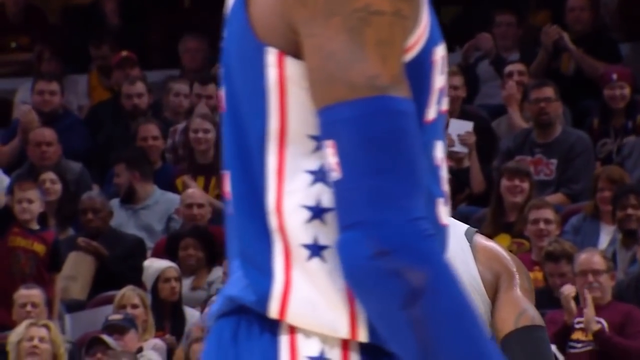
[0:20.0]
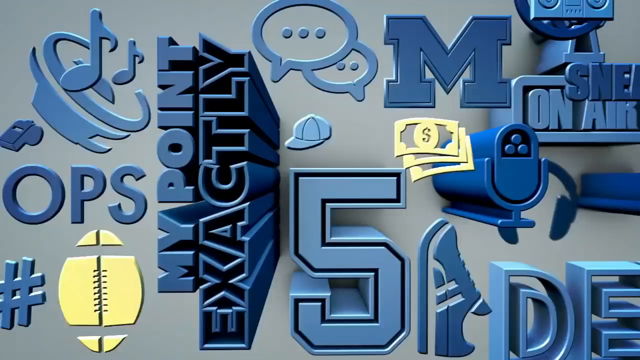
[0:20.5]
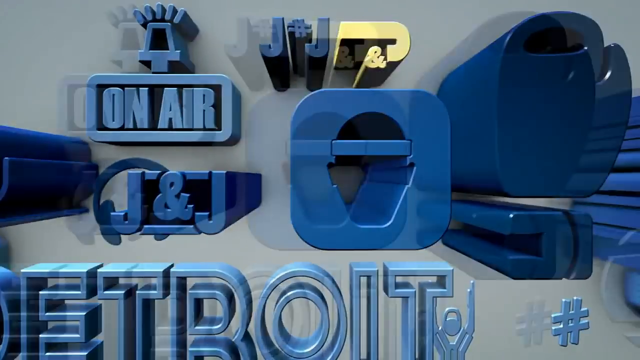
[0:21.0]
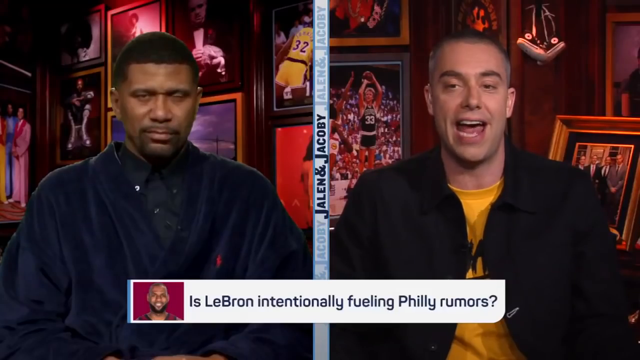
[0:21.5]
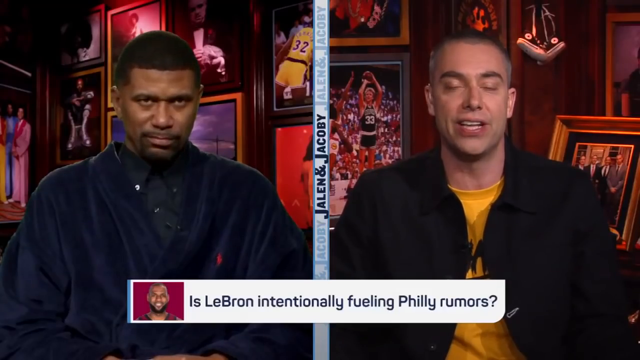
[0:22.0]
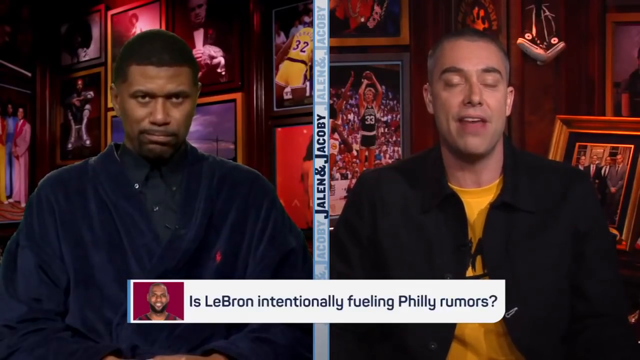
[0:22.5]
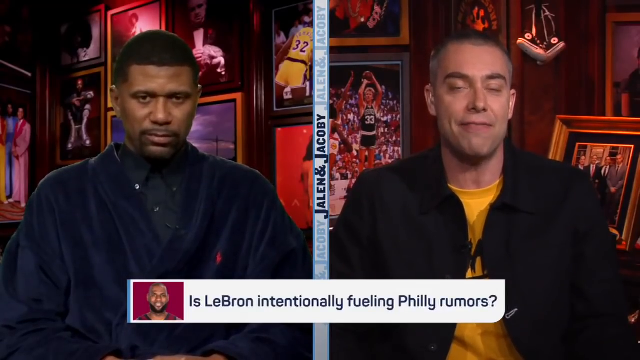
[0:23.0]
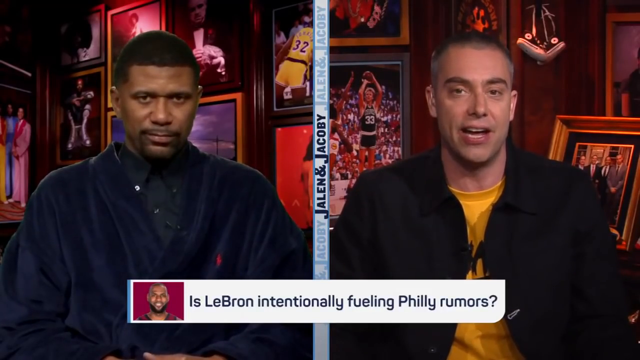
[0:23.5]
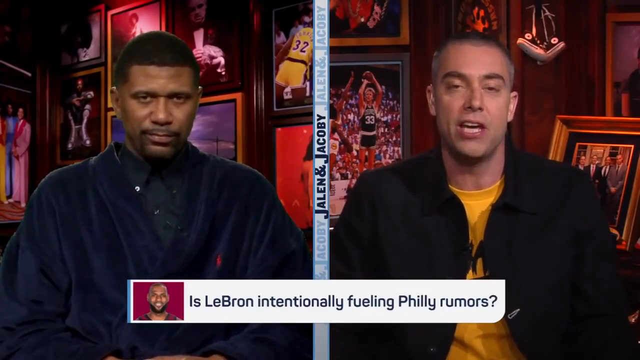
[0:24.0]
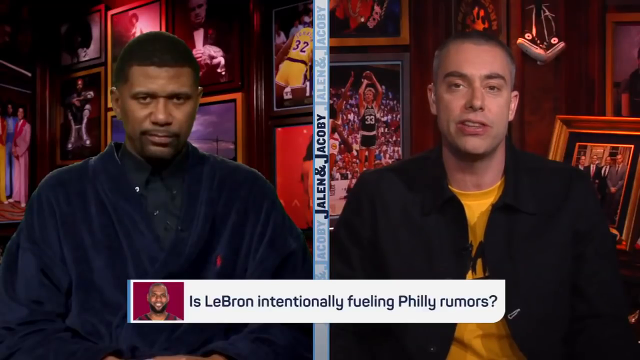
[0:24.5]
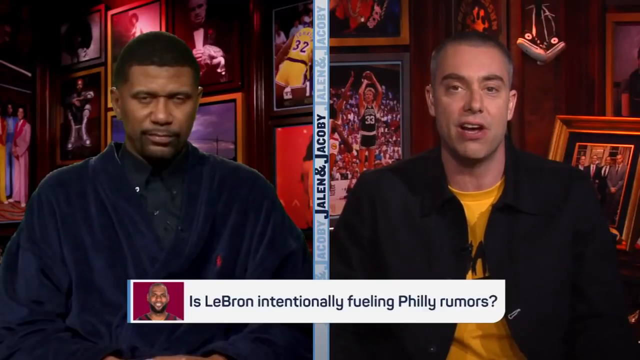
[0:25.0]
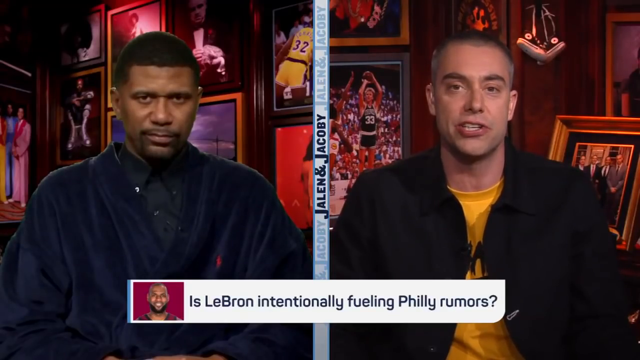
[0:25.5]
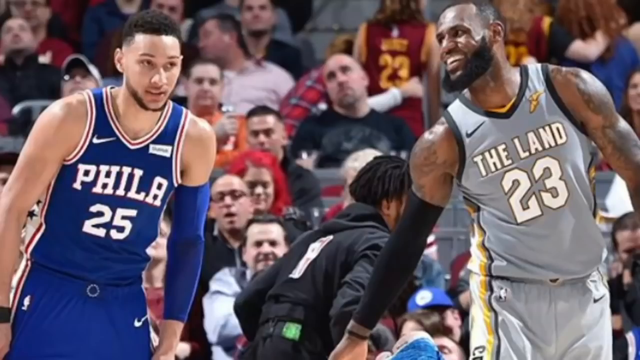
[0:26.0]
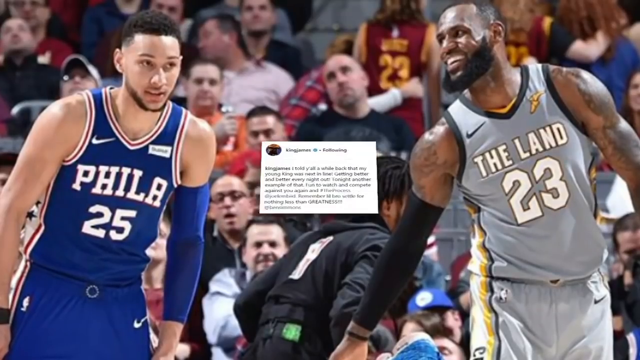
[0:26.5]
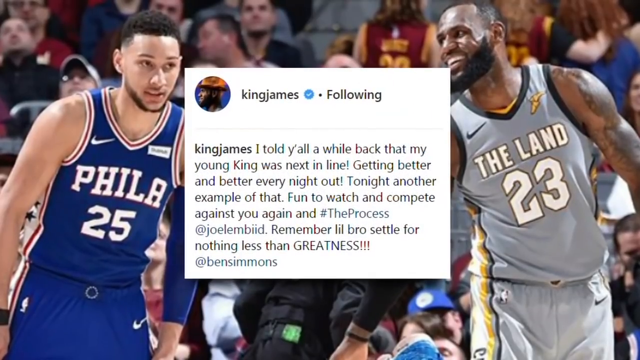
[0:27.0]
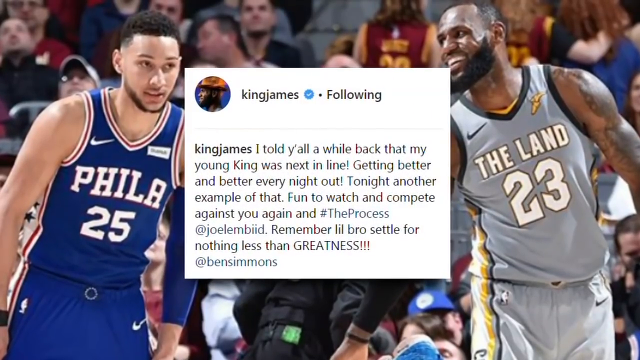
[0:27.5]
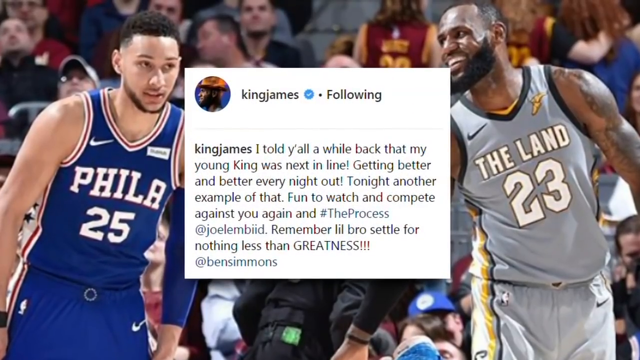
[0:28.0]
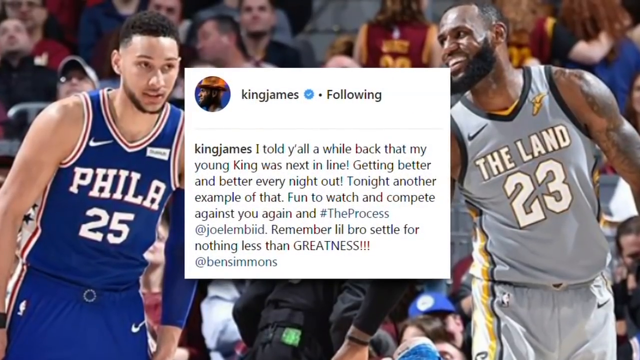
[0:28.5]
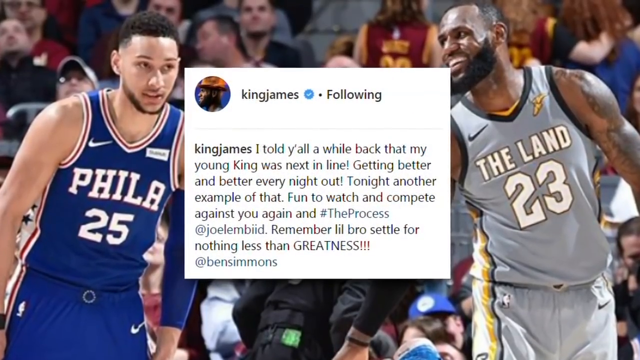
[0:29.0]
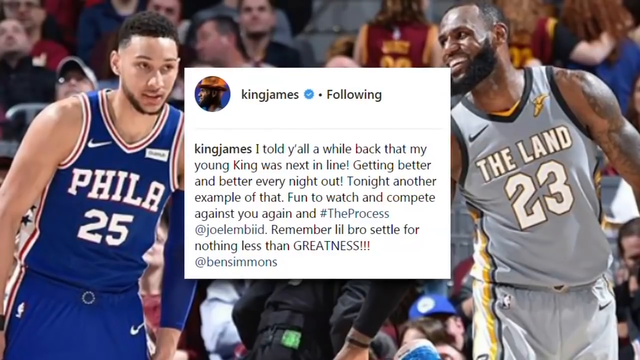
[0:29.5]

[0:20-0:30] The Lakers game footage is briefly visible before the video switches back to the split screen with Jalen Rose and the other man, with sports memorabilia in the background featuring Celtics player Larry Bird, Magic Johnson, LeBron James and plenty of other NBA stars. A marquee at the bottom of the screen has a picture of LeBron James on a red background and black lettering that reads "is LeBron intentionally fueling the Philly rumors?"